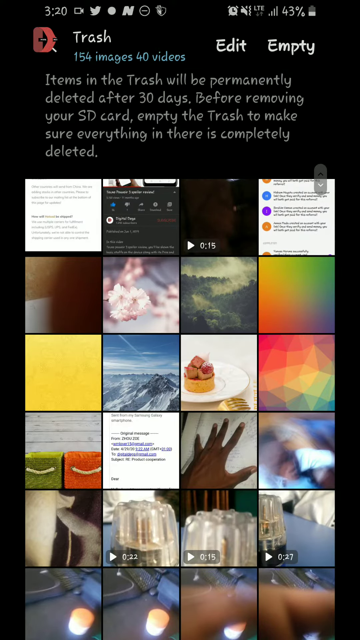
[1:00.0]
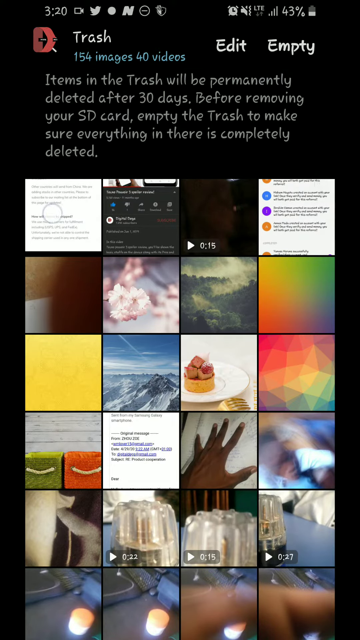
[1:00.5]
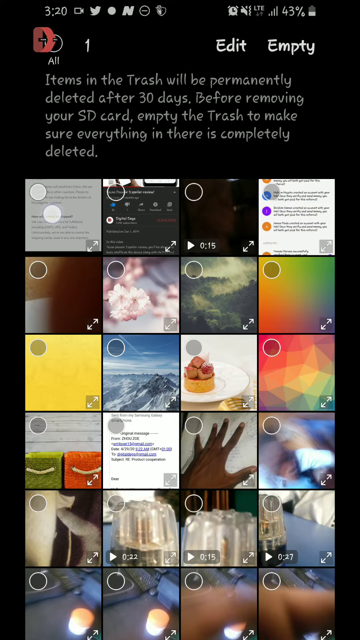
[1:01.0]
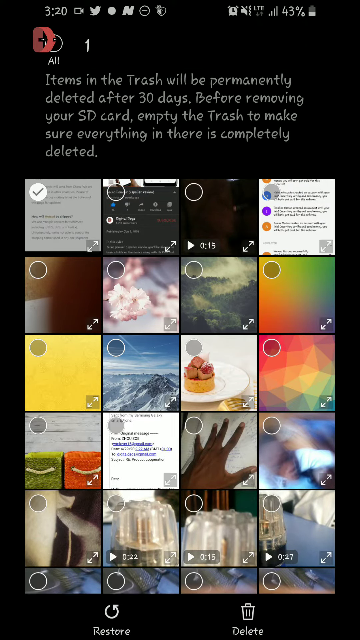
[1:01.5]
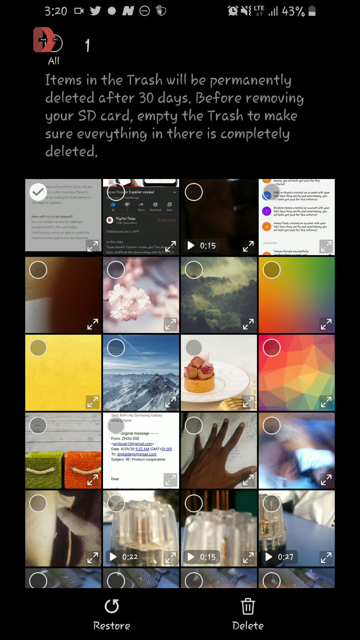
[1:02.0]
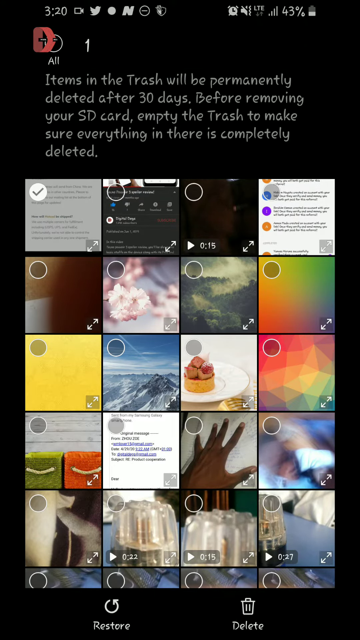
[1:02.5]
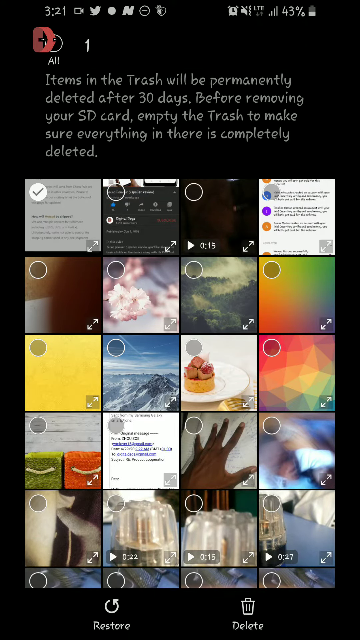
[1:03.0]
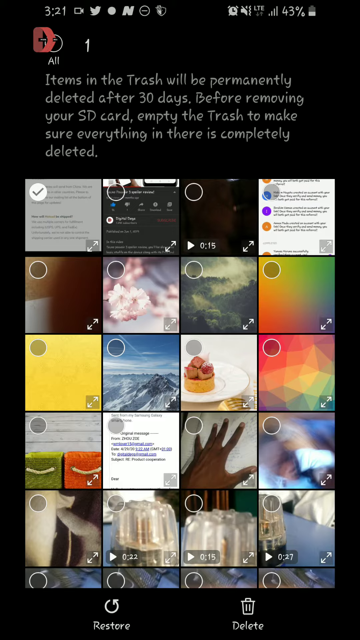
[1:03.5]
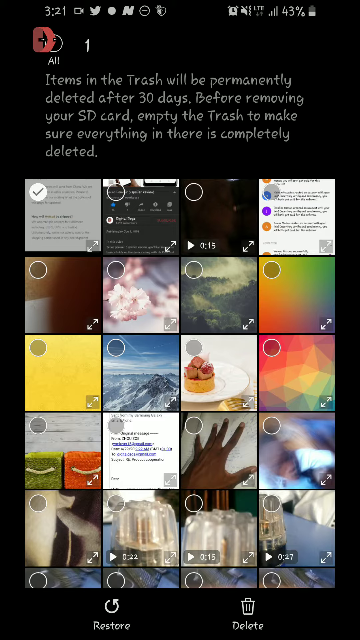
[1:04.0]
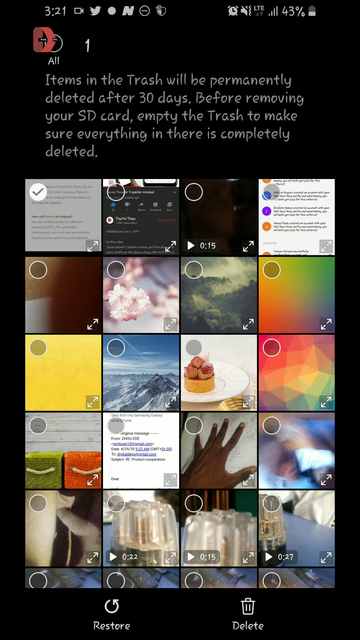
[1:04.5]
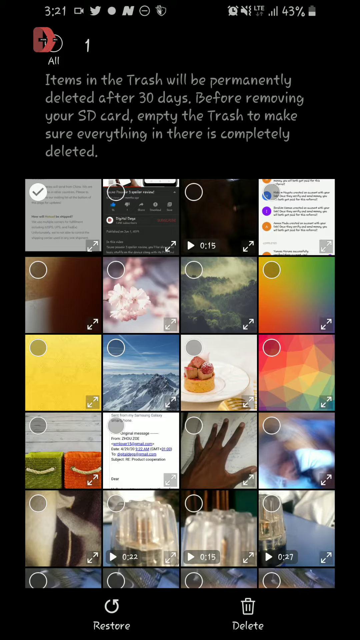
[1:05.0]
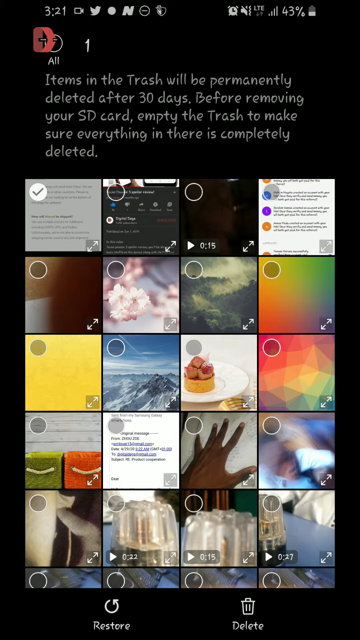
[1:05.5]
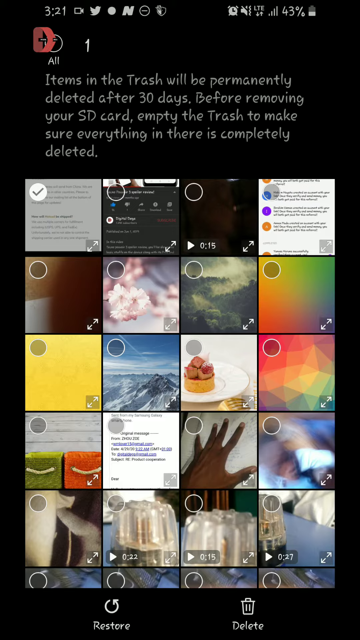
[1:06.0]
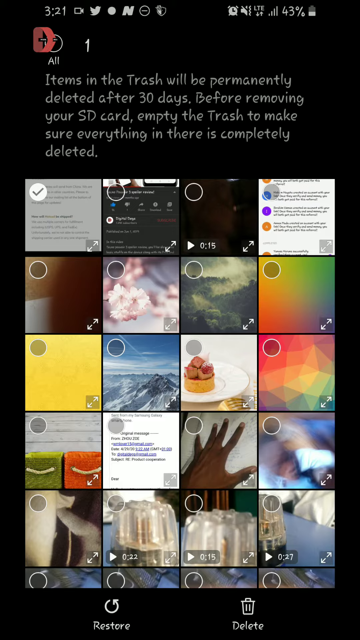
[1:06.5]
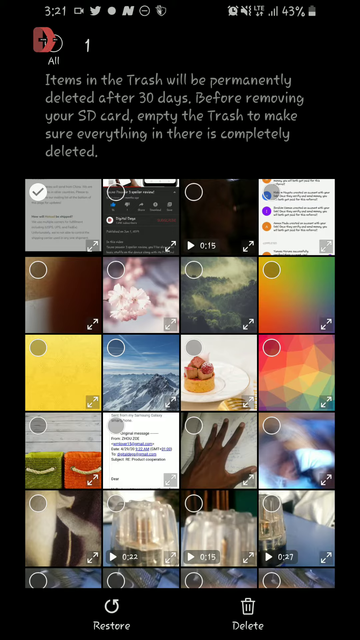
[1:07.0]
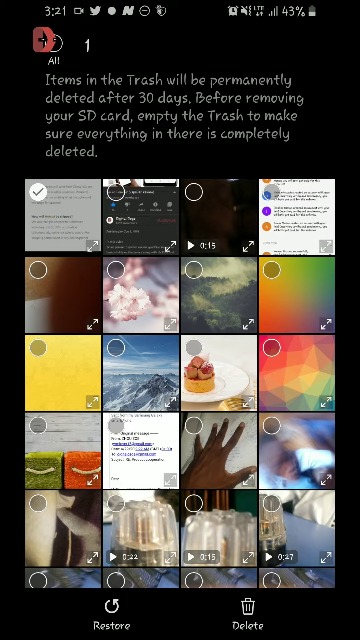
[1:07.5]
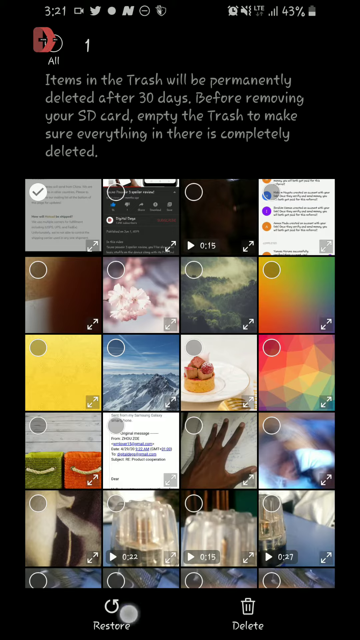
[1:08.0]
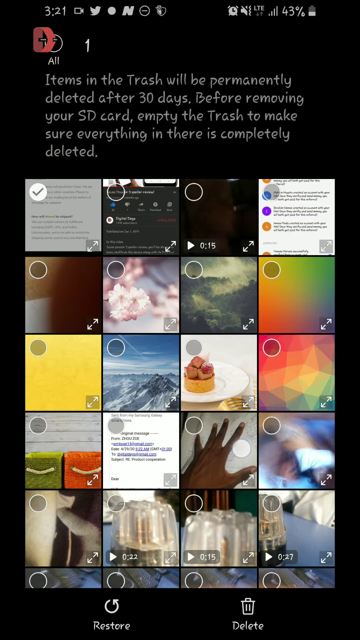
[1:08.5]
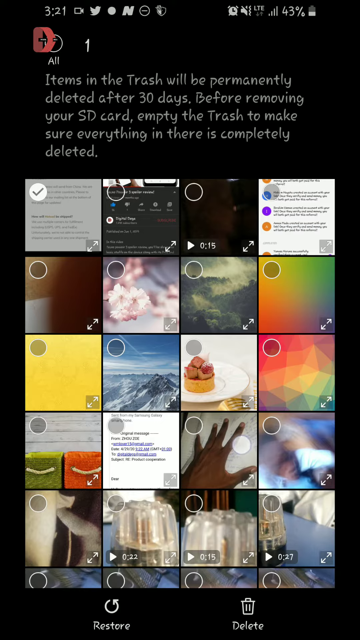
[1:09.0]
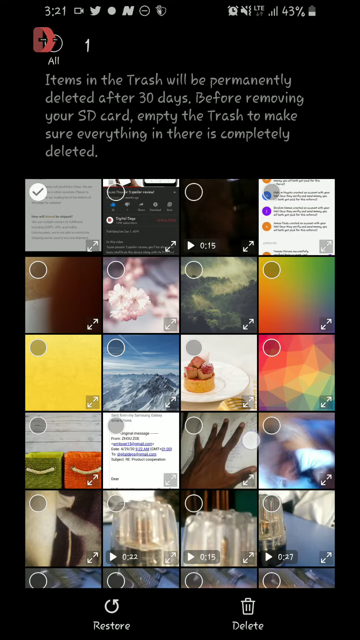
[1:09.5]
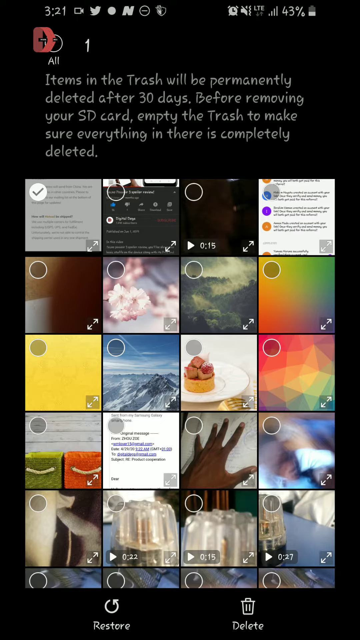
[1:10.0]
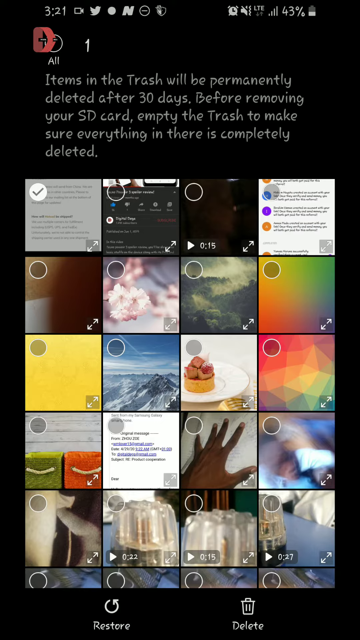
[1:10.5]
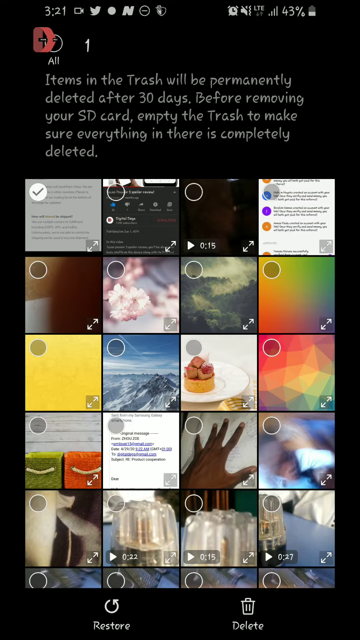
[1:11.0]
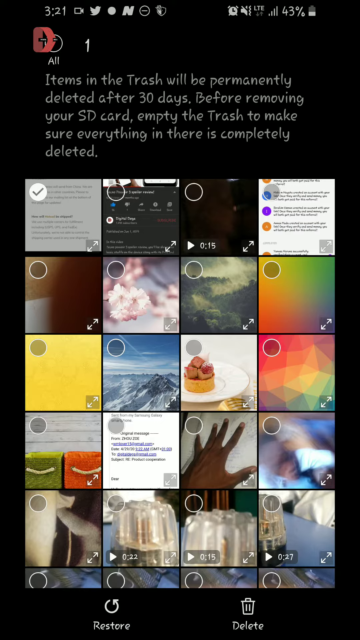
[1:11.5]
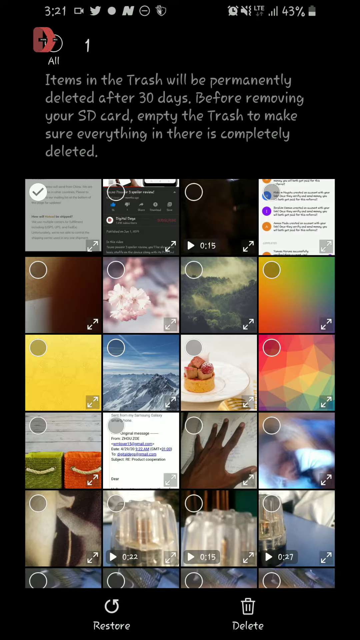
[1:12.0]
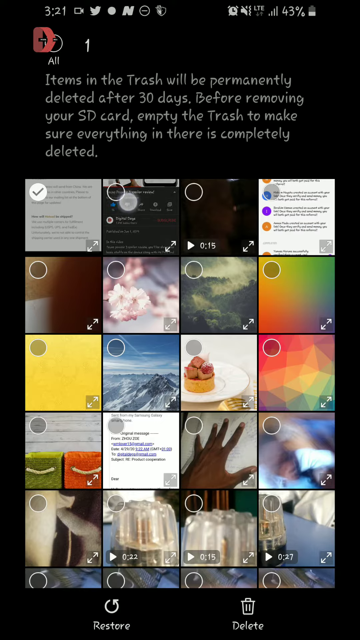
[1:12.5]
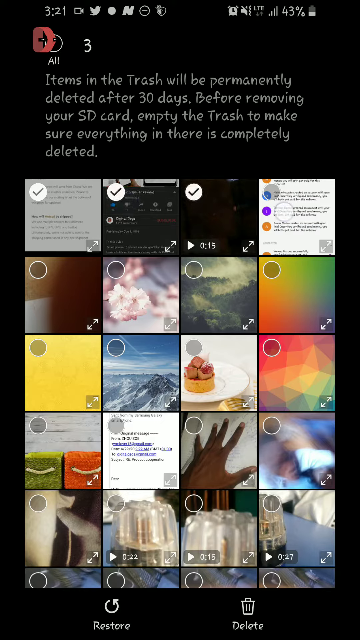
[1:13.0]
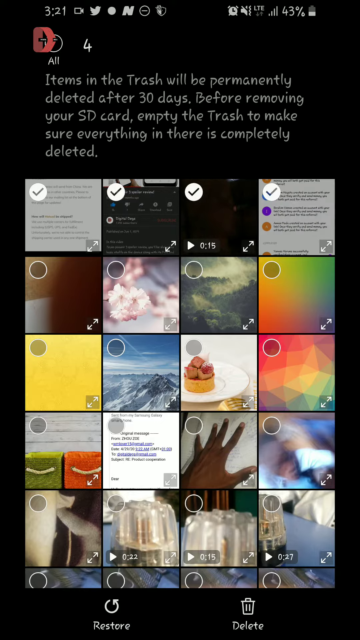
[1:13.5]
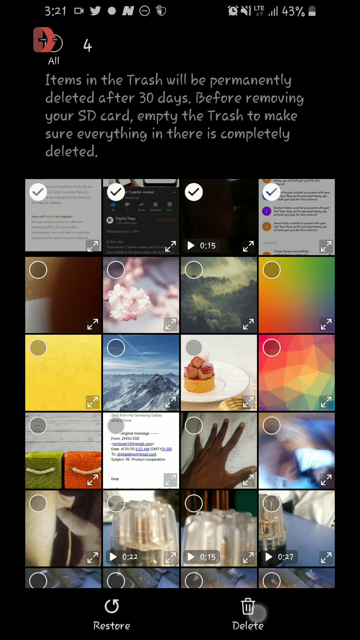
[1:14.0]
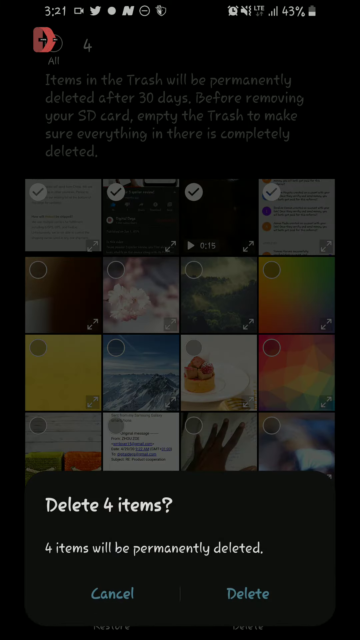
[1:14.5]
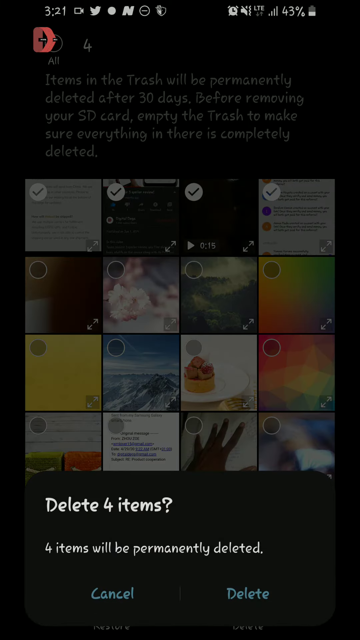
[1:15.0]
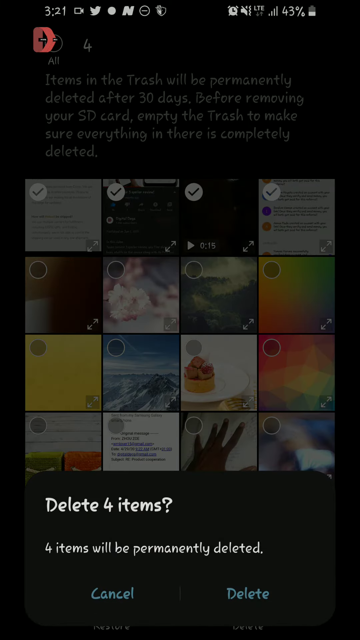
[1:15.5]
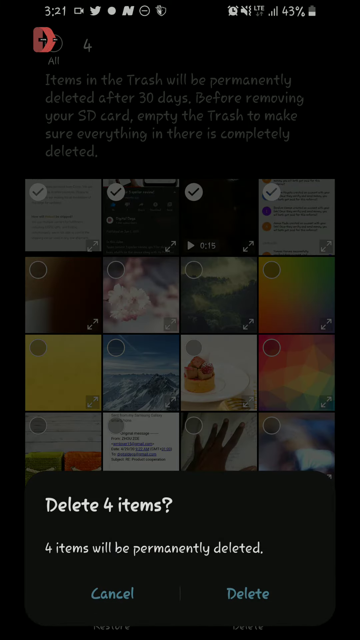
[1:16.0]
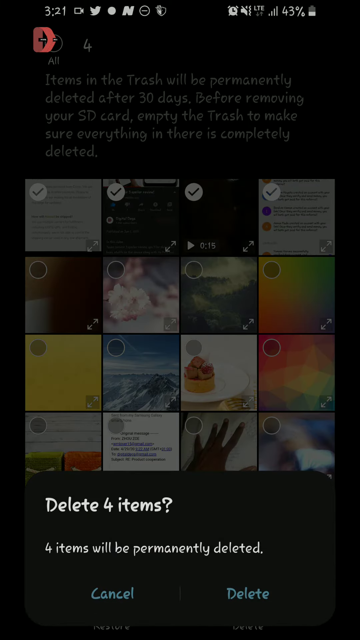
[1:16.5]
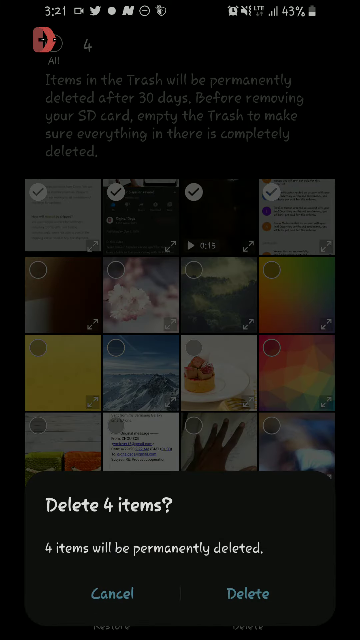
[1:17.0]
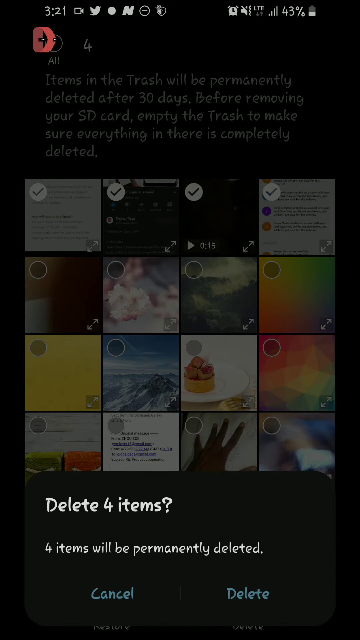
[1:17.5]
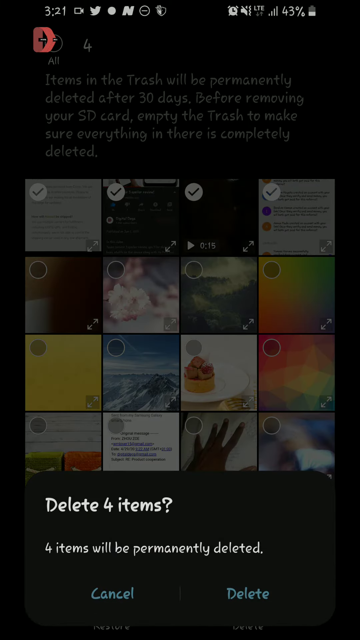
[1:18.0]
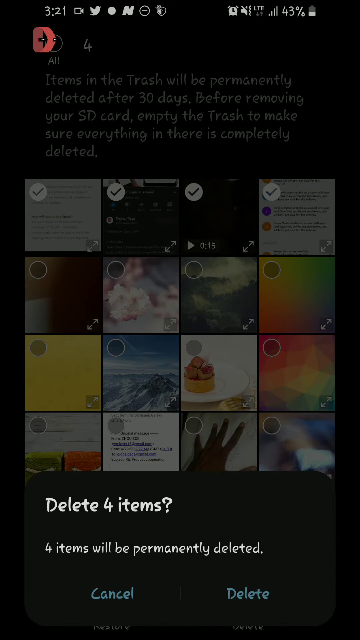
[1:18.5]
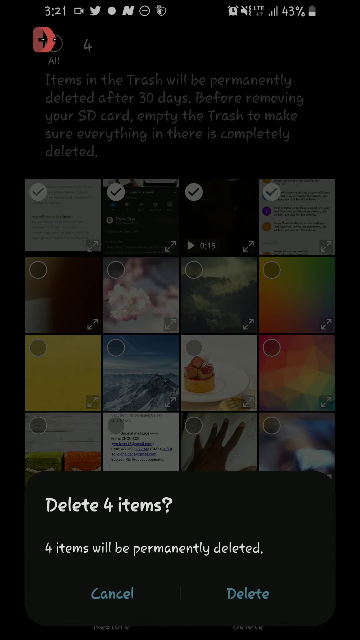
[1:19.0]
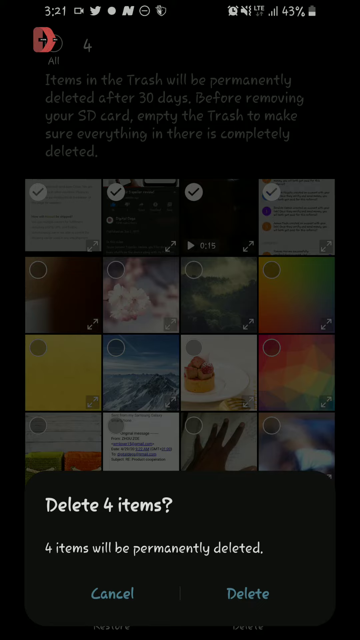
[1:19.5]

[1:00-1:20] Inside the trash, the user selects the first video, hovers over some other videos, and finally selects the first, second, third and fourth videos at the top of the screen; selected items show a checkmark at the top left. He then probably taps the trash can icon at the bottom right. A prompt opens at the very bottom reading "delete four items" and "four items will be permanently deleted," with cancel on the left and delete on the right. The user seems to tap delete.